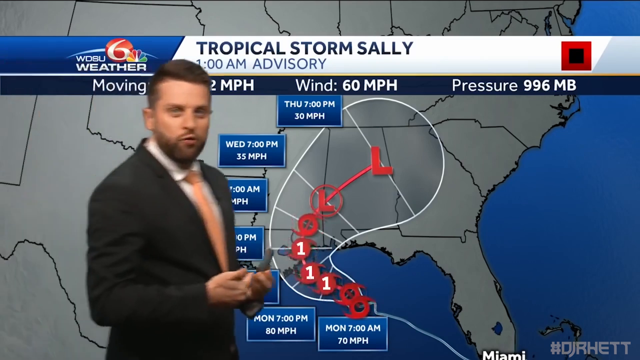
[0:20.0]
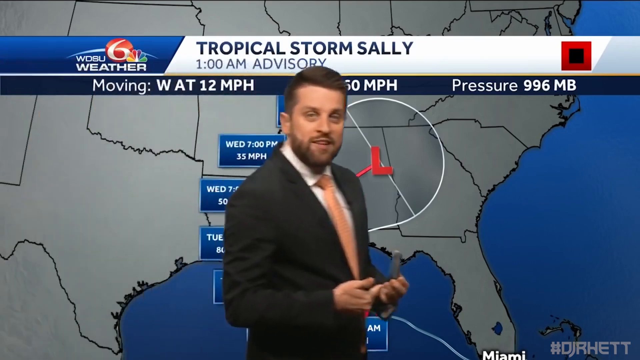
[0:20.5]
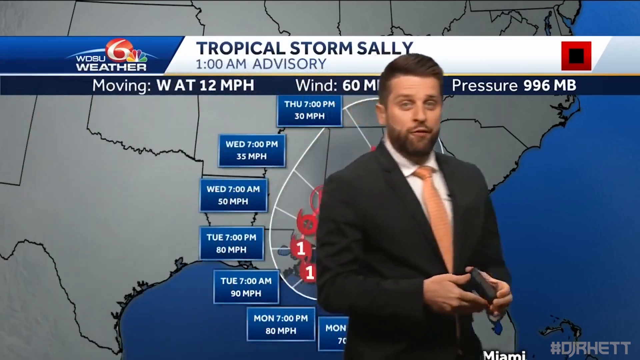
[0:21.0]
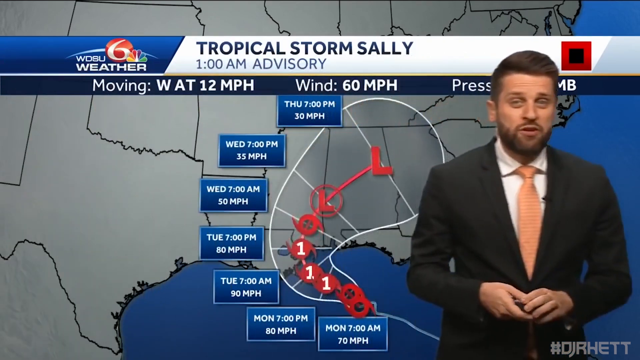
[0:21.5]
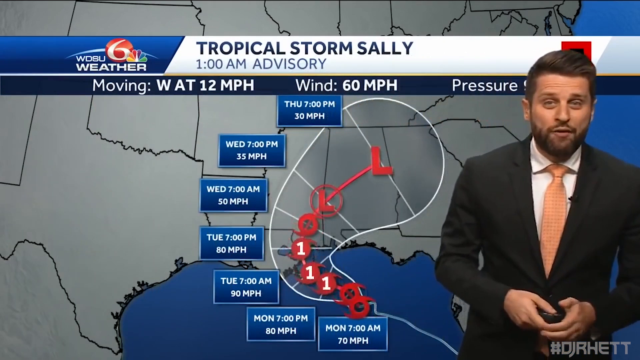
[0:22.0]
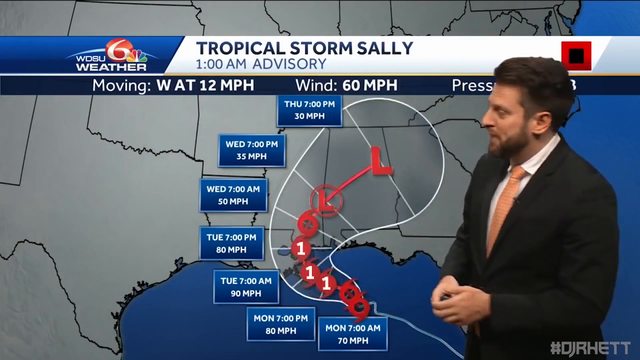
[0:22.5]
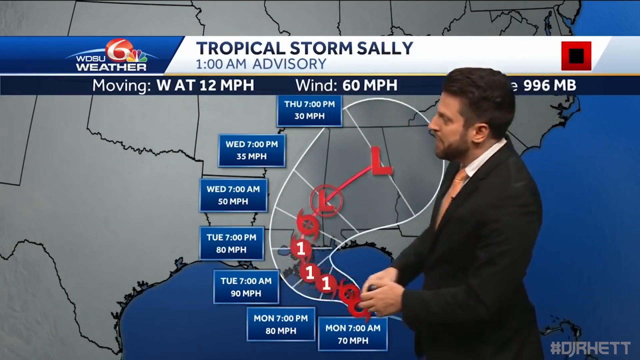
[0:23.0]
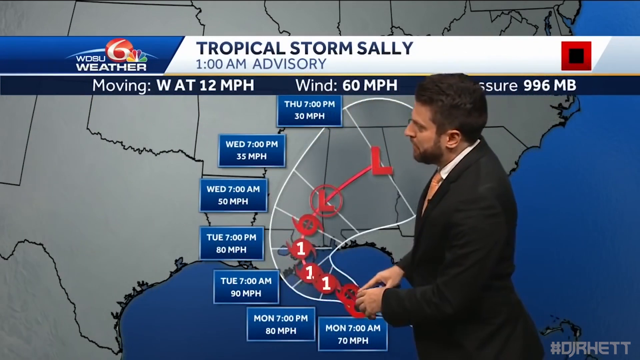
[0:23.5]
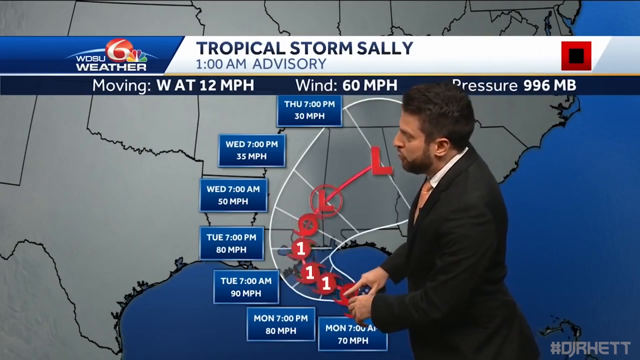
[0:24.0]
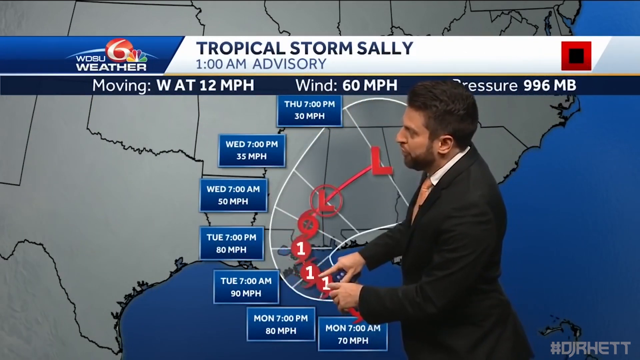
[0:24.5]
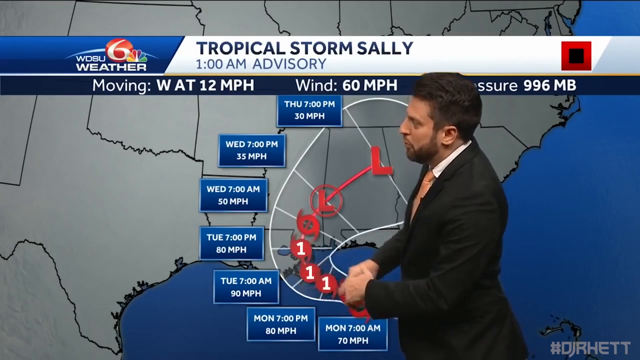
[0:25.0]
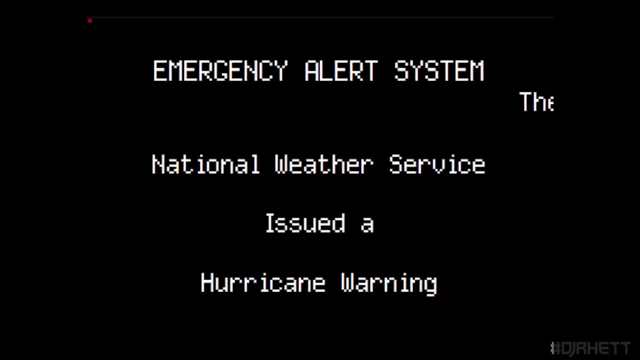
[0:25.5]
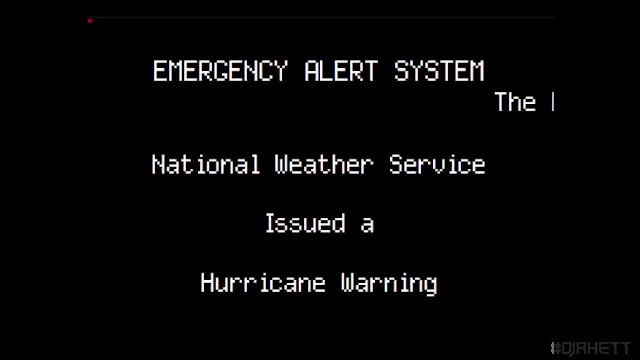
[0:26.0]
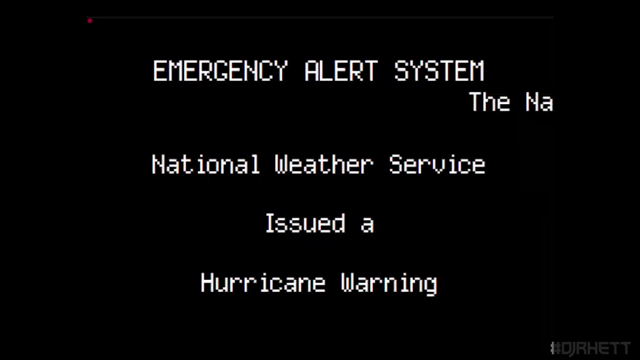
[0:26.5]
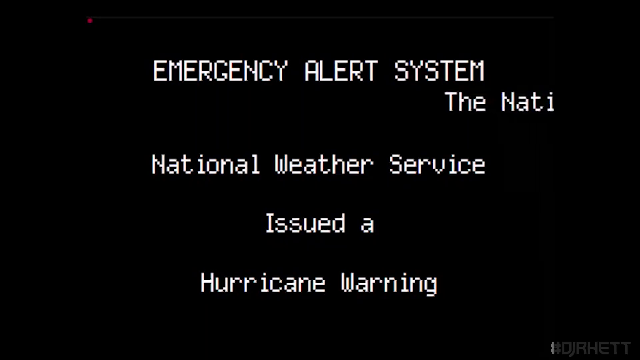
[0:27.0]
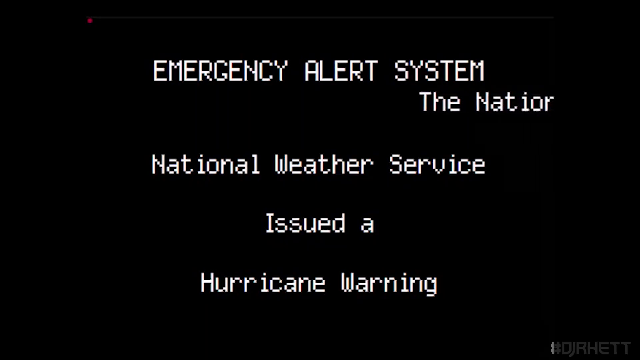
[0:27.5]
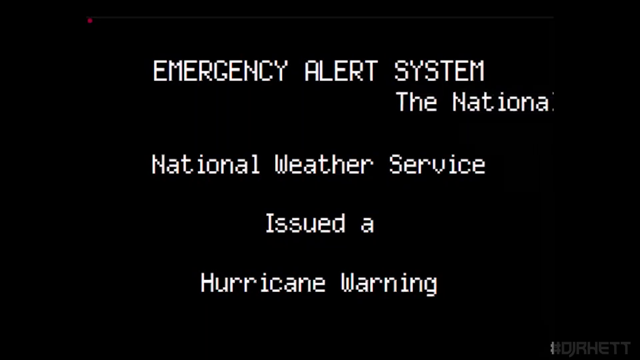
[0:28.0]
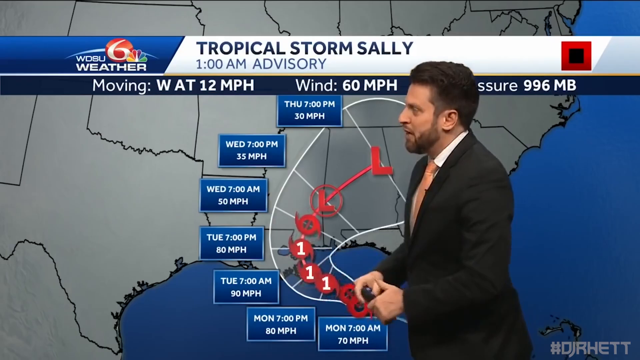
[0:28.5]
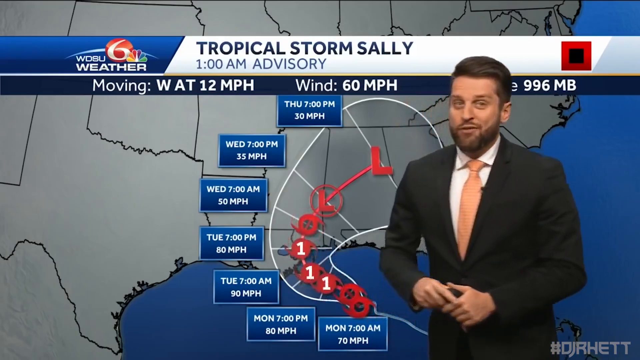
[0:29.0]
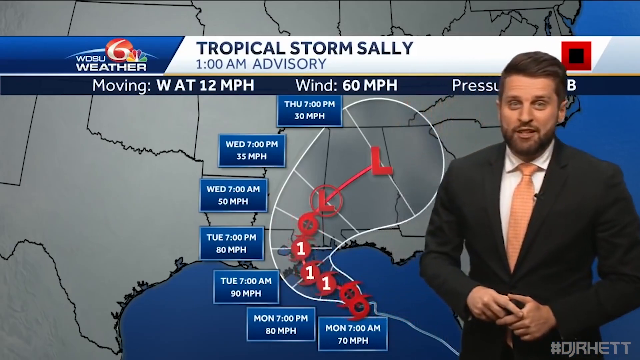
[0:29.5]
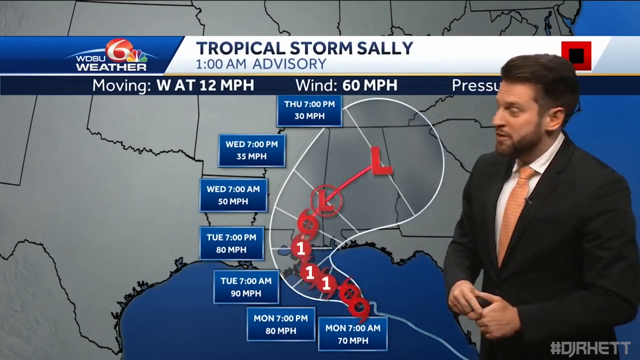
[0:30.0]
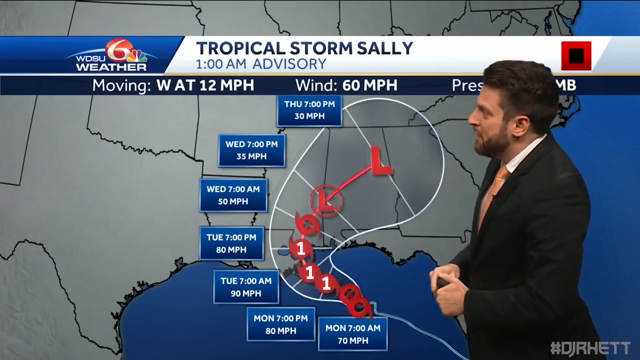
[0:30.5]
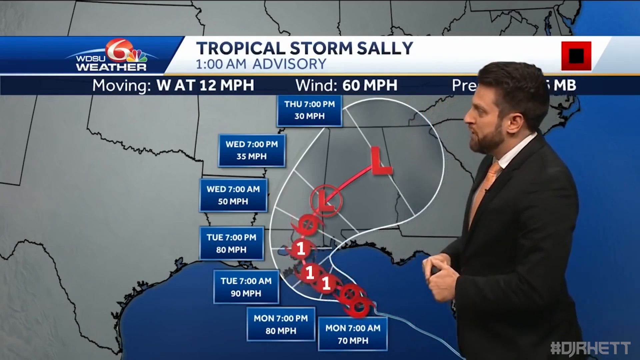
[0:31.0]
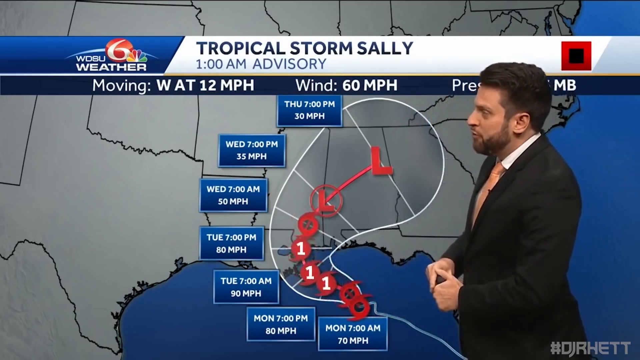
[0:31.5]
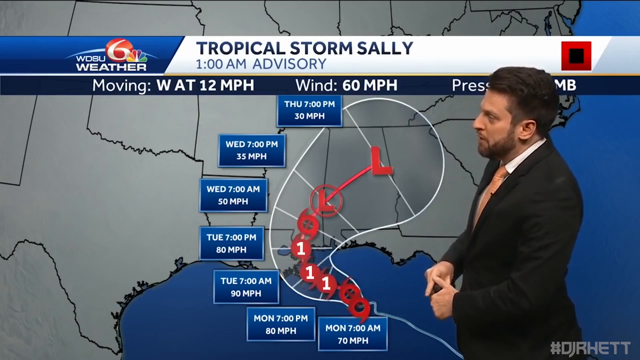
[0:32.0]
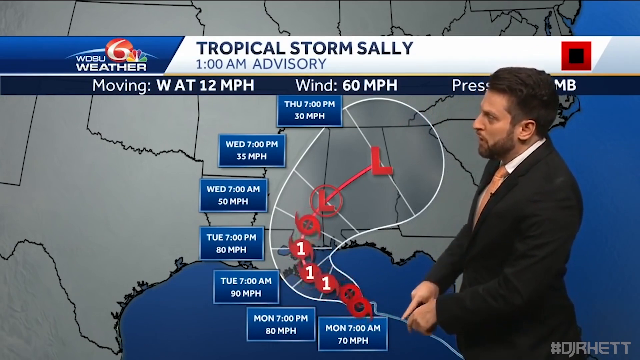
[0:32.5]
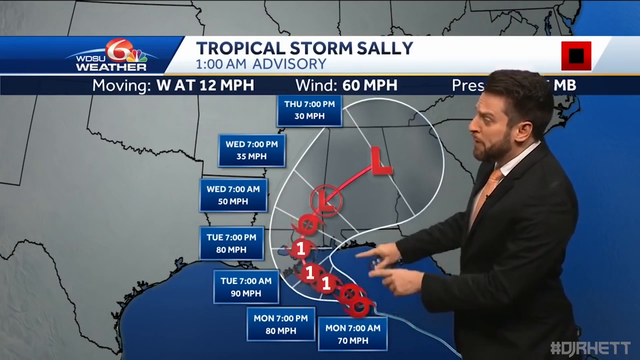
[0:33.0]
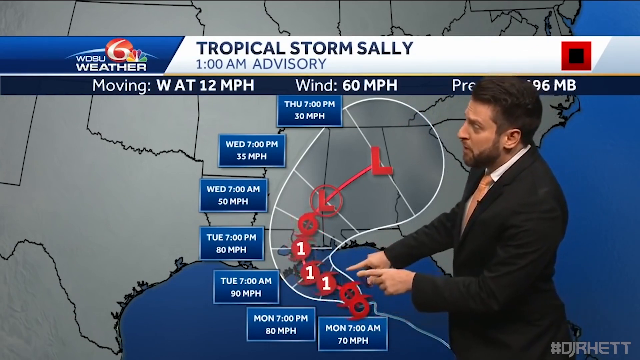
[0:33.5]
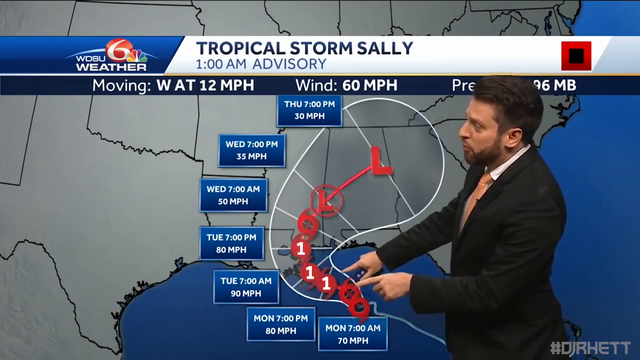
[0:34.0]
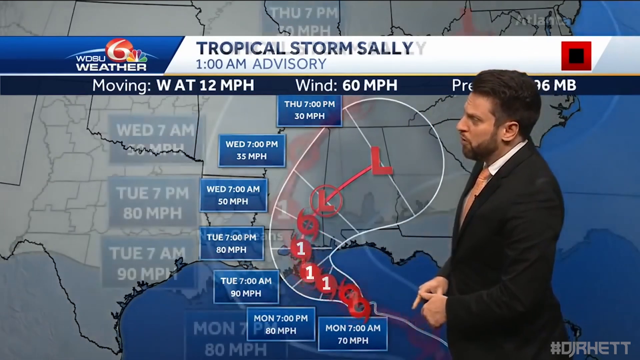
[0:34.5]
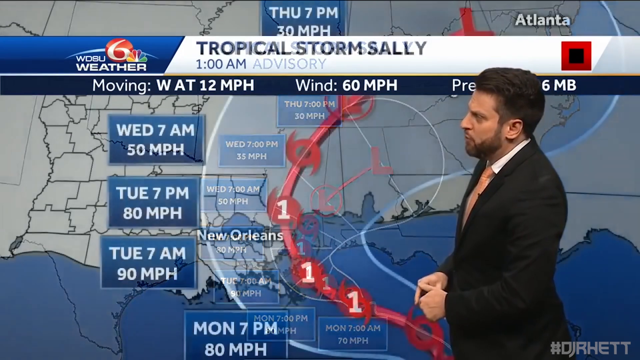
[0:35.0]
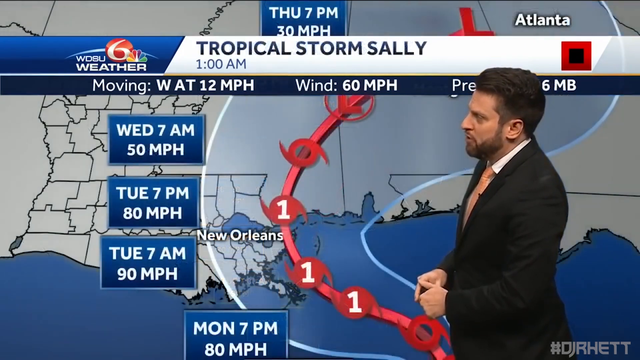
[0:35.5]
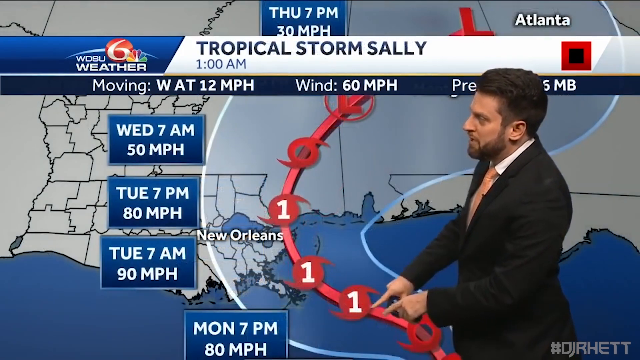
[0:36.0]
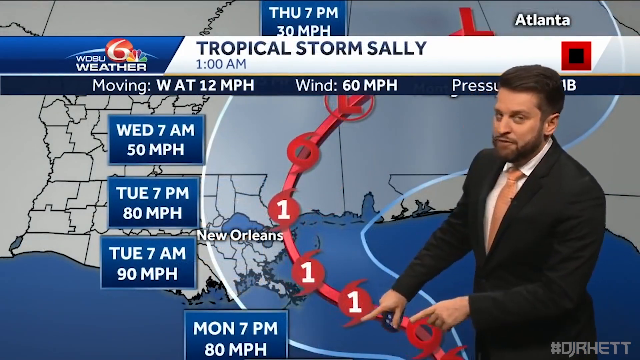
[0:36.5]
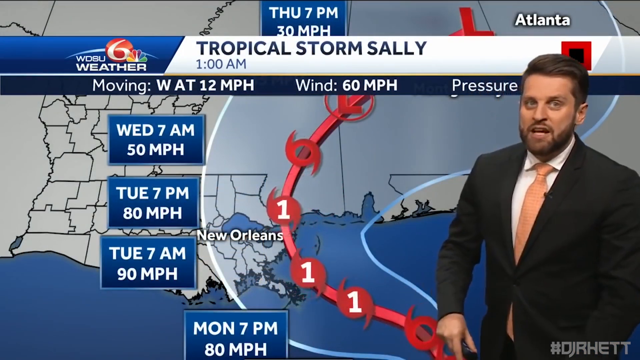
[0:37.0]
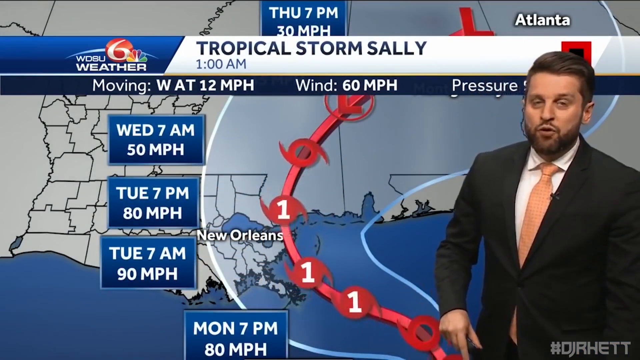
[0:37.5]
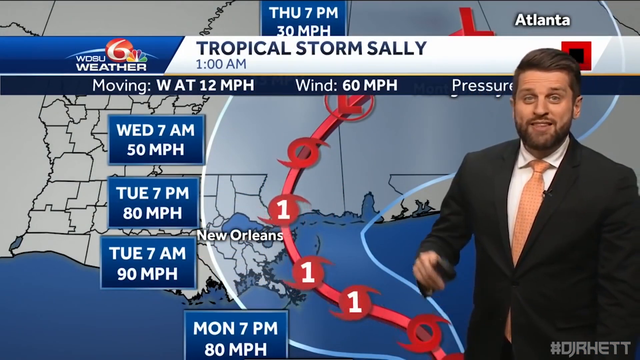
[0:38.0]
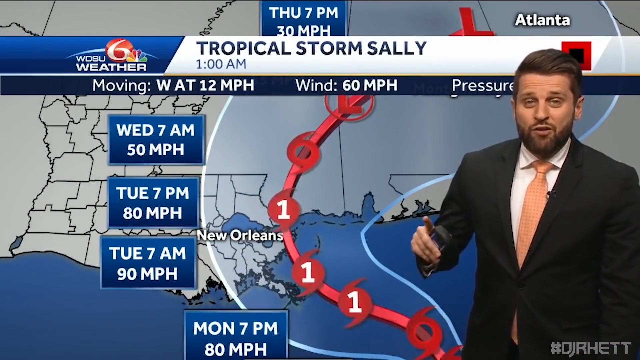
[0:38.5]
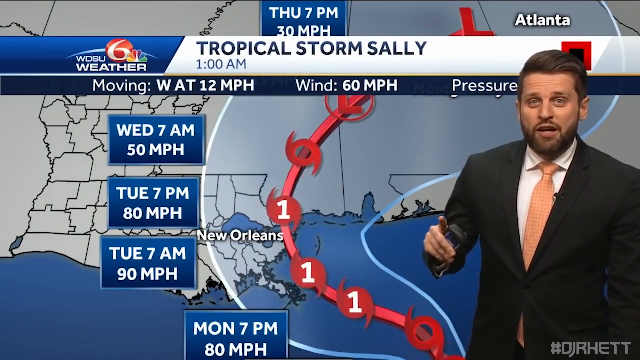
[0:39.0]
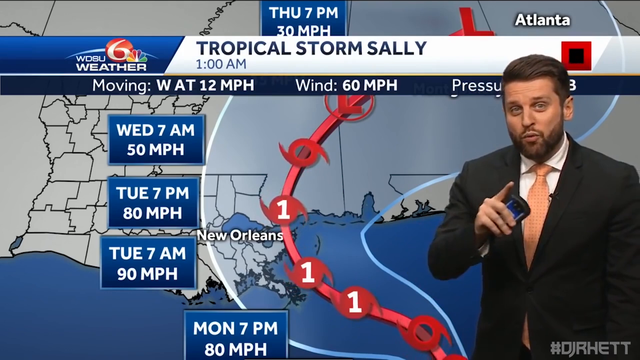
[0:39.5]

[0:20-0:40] The reporter stands in front of a screen showing the path of Hurricane Sally and which states it will move into, predominantly Louisiana, Georgia and Alabama. The storm appears to widen as it expands over time, with wind velocity of 60 miles per hour. An emergency alert is issued: a hurricane warning. The display refers to Tropical Storm Sally and a 1 a.m. advisory, on WDSU Channel 6 weather. The path shows what times the storm will hit the mainland, coming in from the west, moving at 12 miles per hour with winds at 60 miles per hour. The barometric pressure is 996.